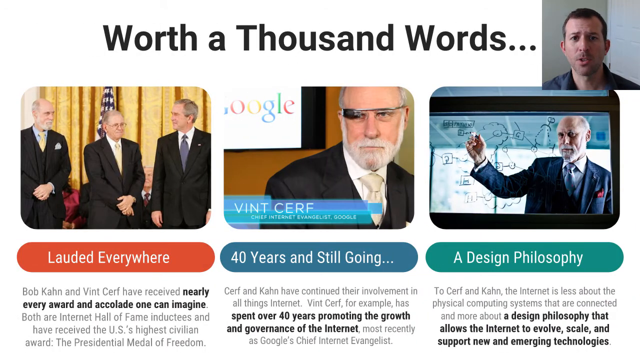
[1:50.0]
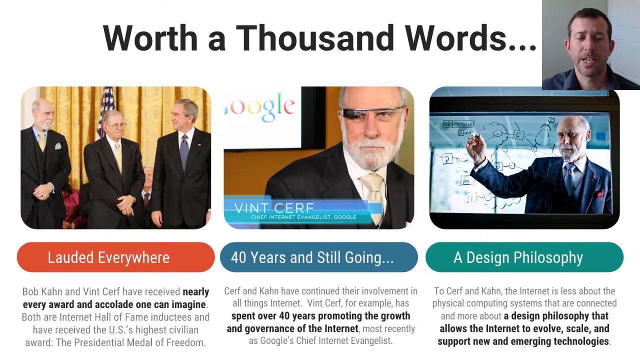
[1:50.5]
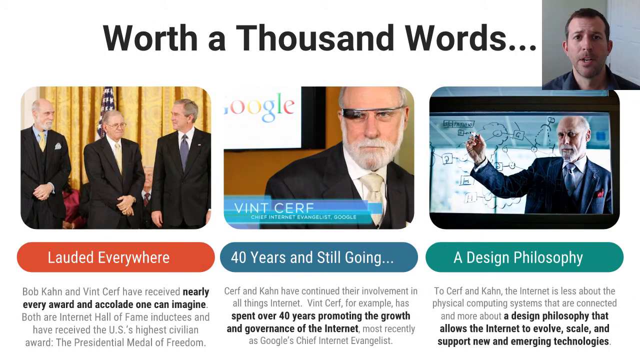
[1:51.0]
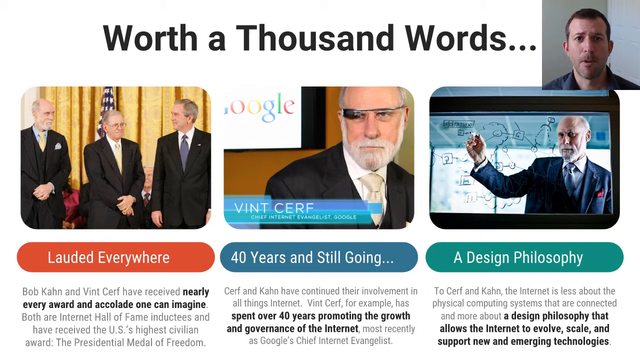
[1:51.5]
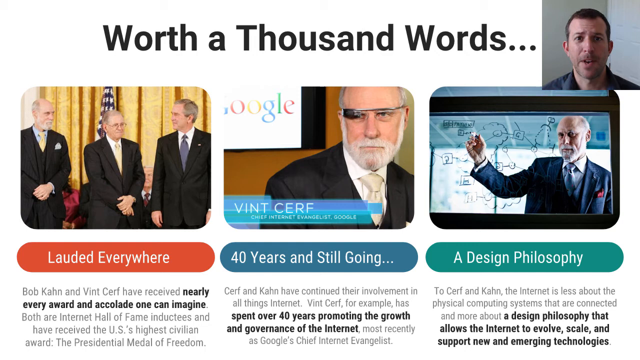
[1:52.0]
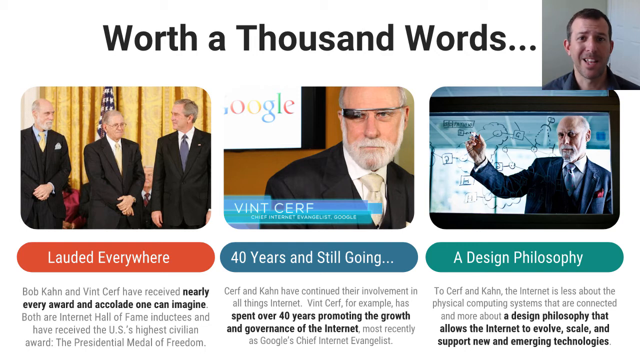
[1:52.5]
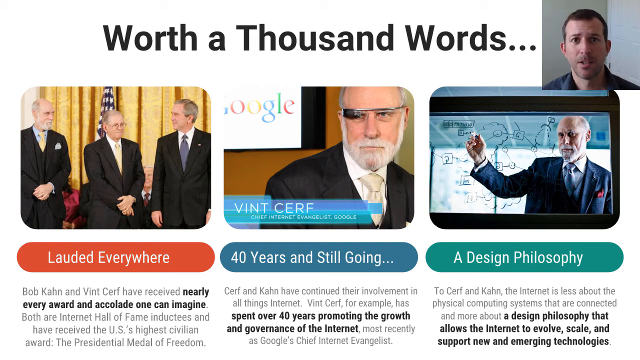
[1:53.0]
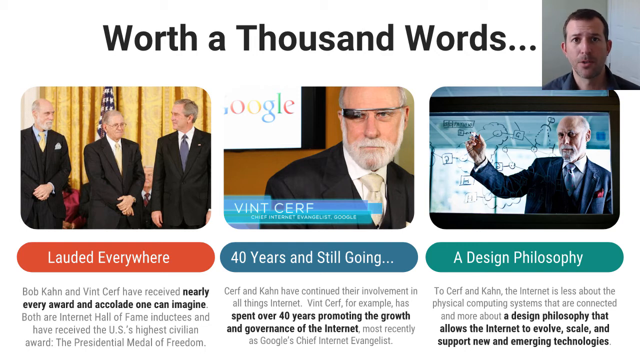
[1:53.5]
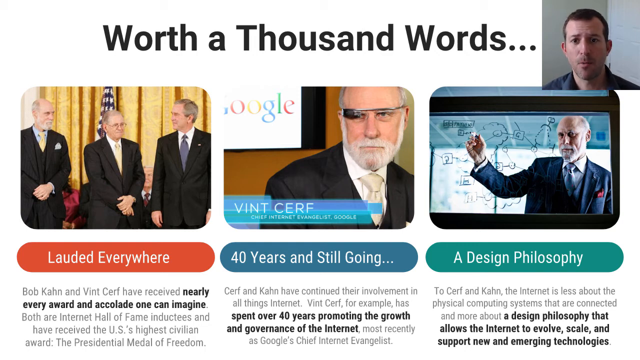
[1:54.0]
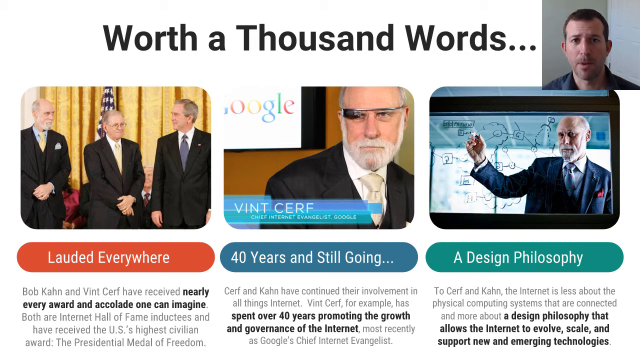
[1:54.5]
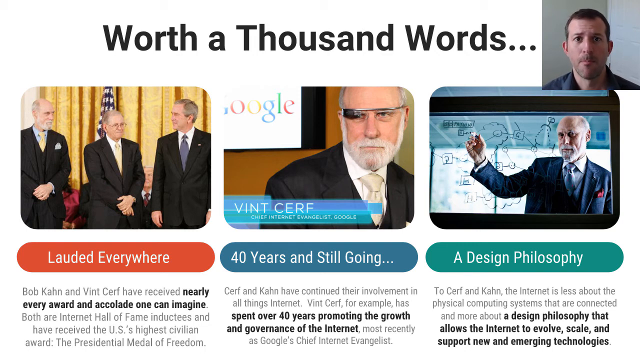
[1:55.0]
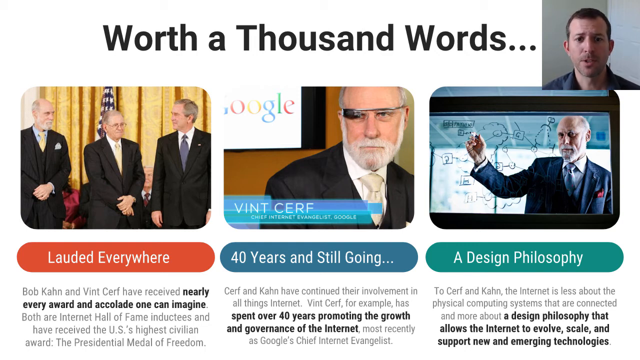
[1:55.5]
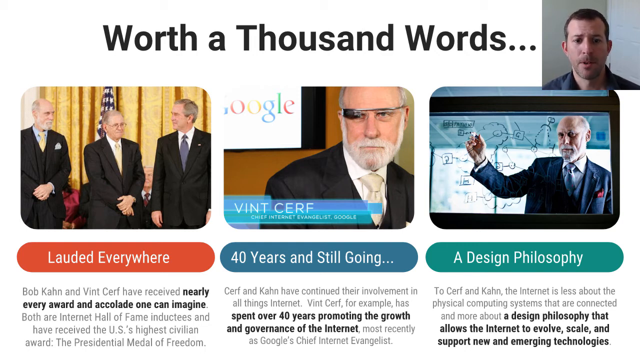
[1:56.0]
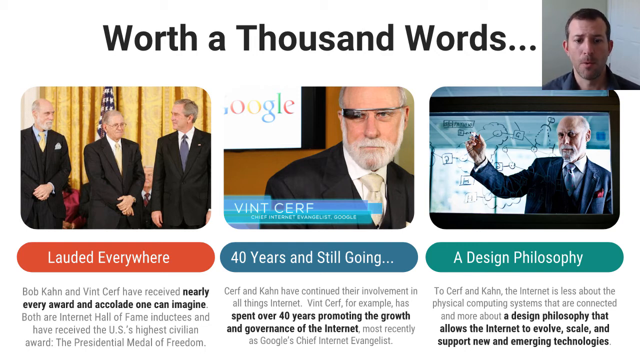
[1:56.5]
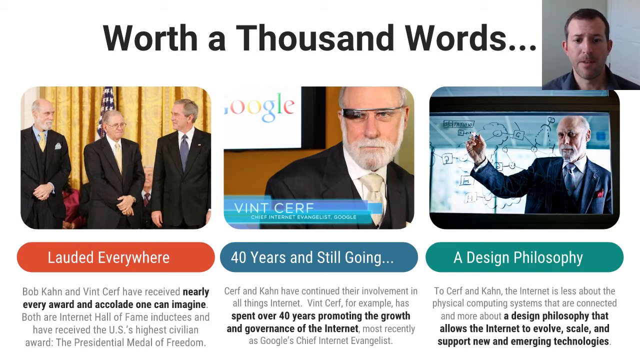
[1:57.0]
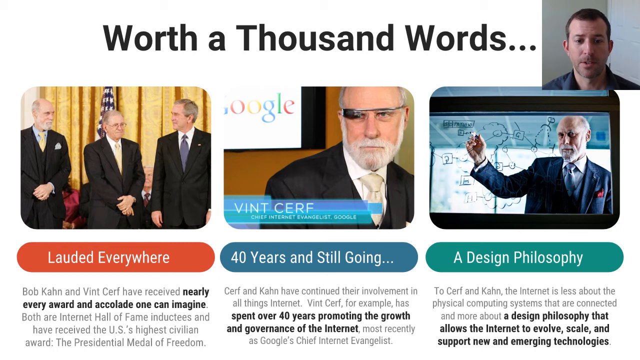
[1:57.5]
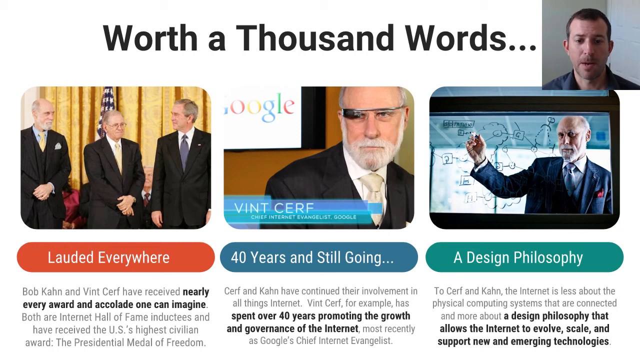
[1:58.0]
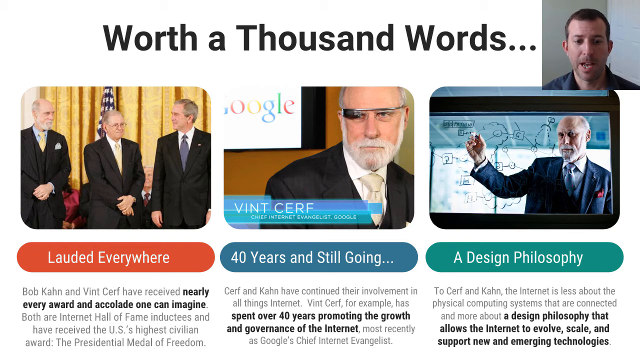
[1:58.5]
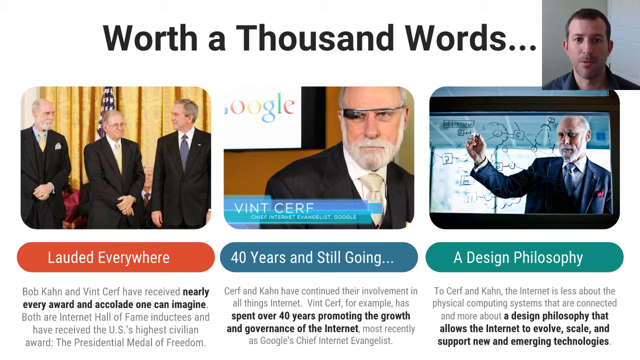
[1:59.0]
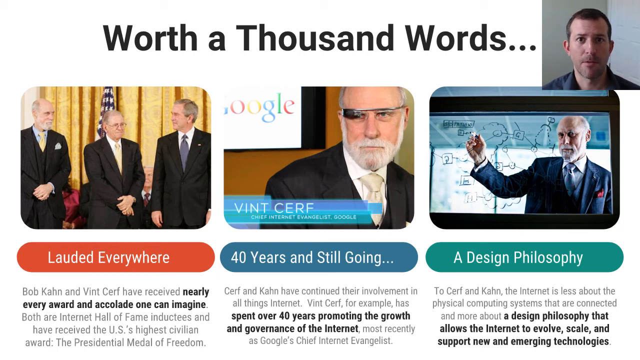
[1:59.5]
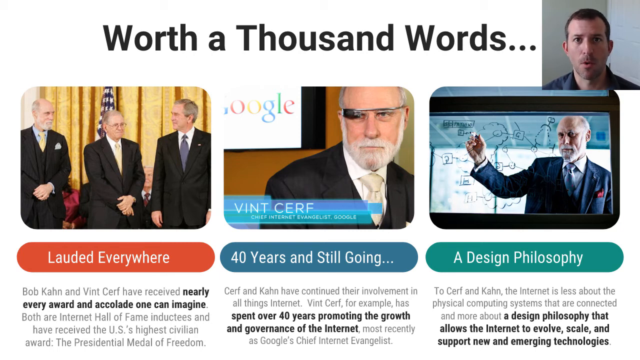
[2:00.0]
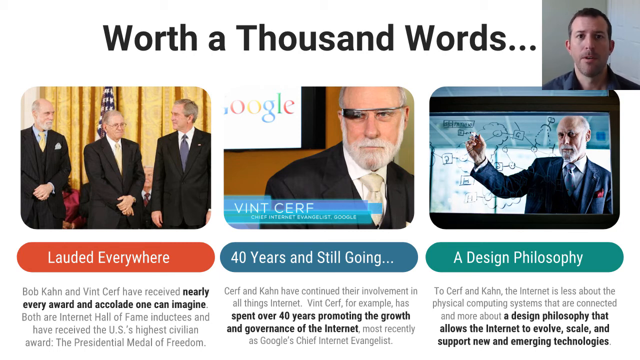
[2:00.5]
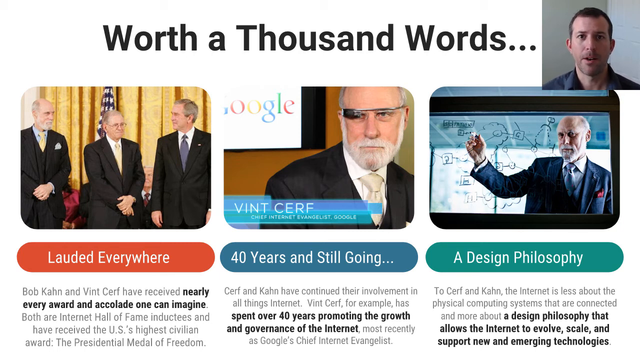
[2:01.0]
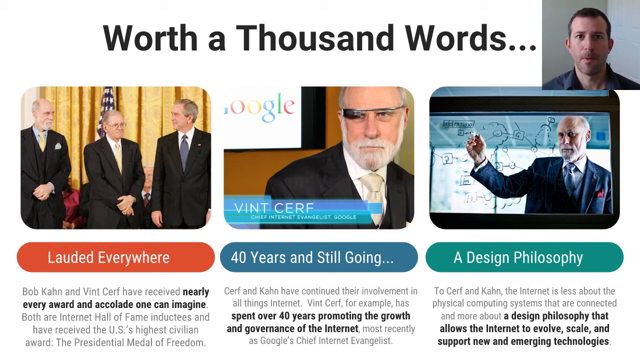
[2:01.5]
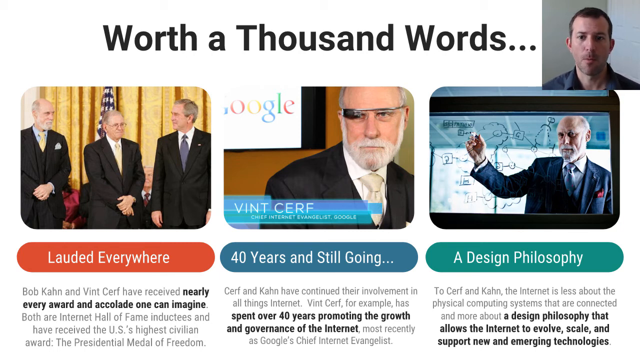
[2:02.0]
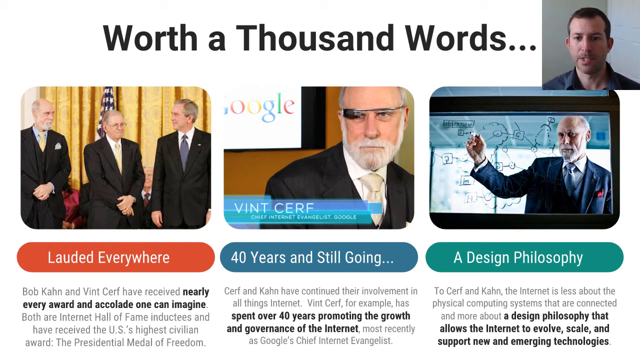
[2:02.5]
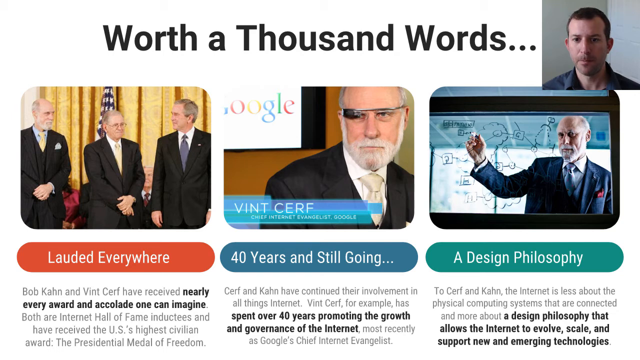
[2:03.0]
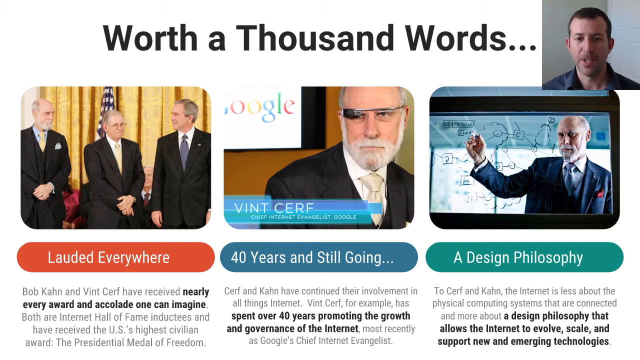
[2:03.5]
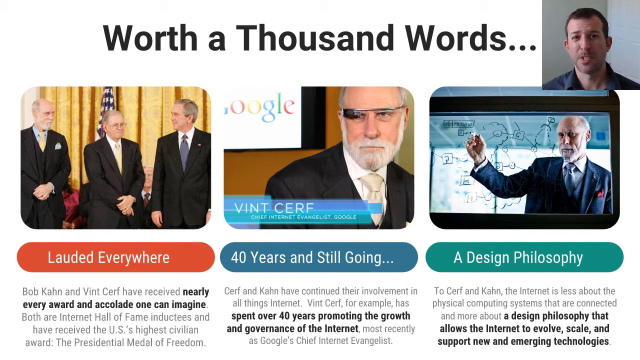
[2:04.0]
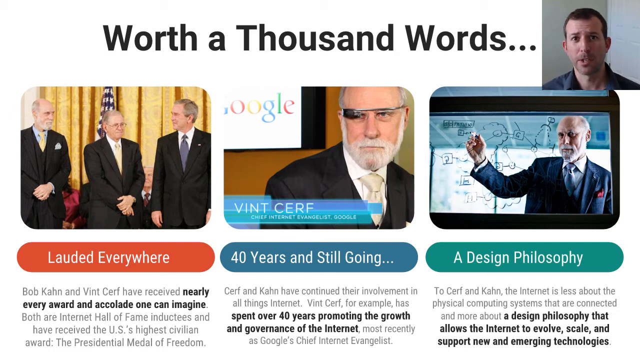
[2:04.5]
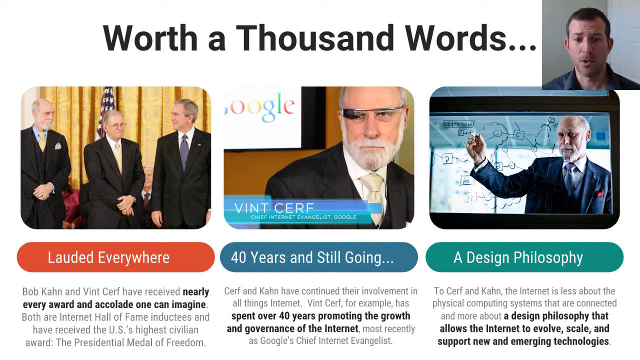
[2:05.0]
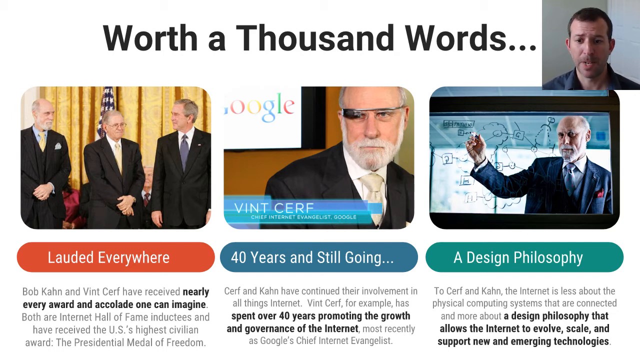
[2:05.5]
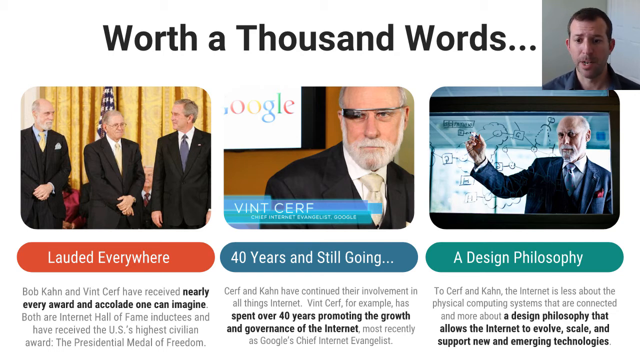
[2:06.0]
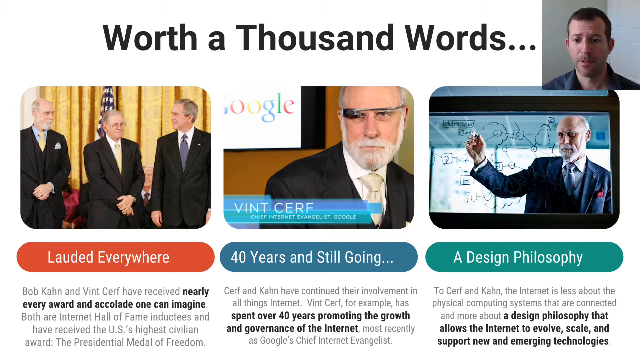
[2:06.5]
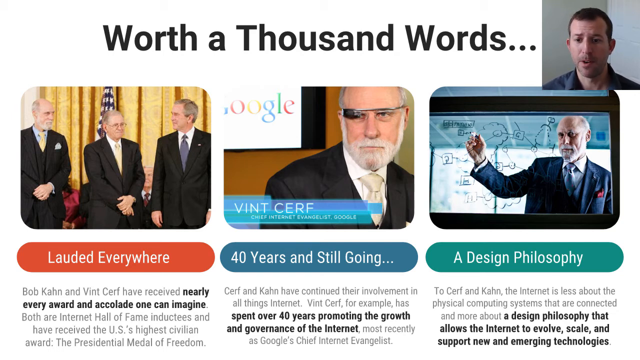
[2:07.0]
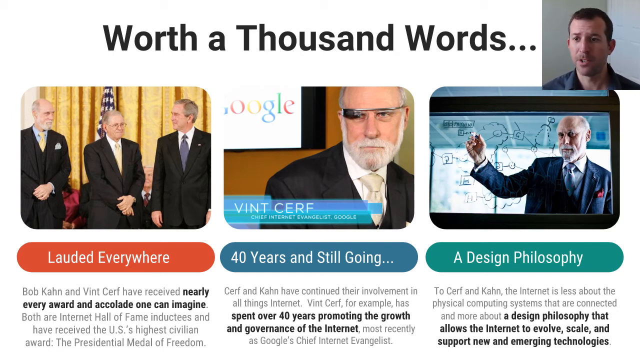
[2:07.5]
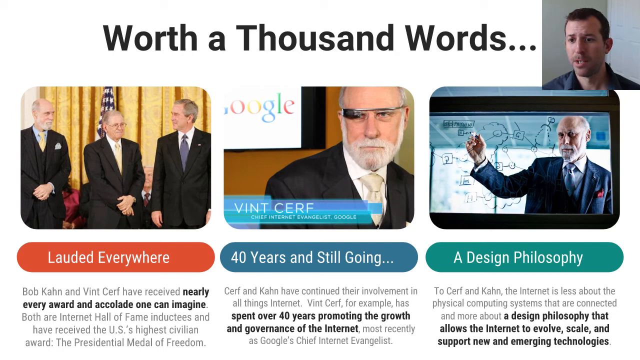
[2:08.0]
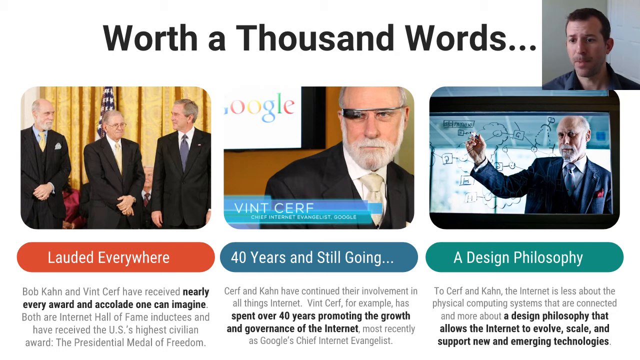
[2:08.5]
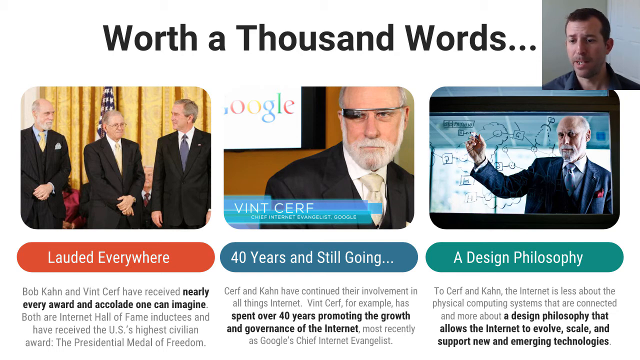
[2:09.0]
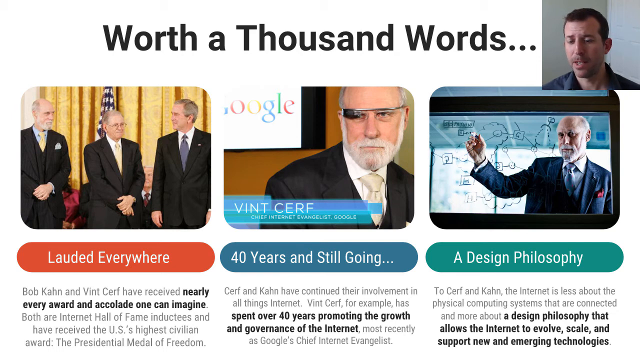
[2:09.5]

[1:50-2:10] In the small square video at the top right of the screen, the narrator appears to be narrating the slide on screen. As he talks, he repeatedly looks down at the screen in front of him and then back up into the camera, several times. He makes facial expressions such as creasing his eyebrows whenever he emphasizes a point, and he opens his mouth slightly more at one side, also as if to stress a point. Sometimes he looks down at the bottom of the screen and sometimes over to the right of the screen. He talks continuously, and at one point he swallows, his Adam's apple moving slightly. He appears to talk at a steady pace, his mouth opening and closing neither too fast nor too slow.